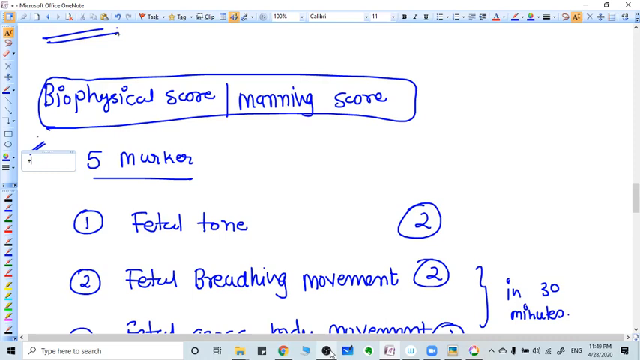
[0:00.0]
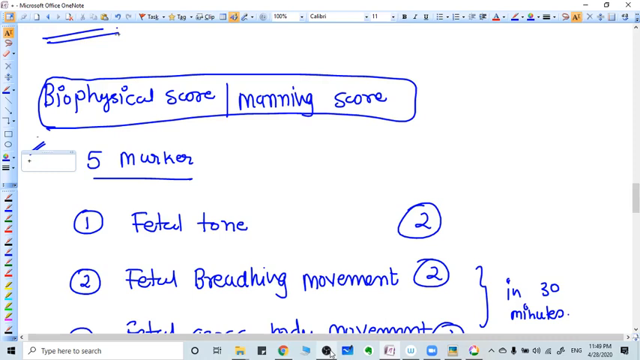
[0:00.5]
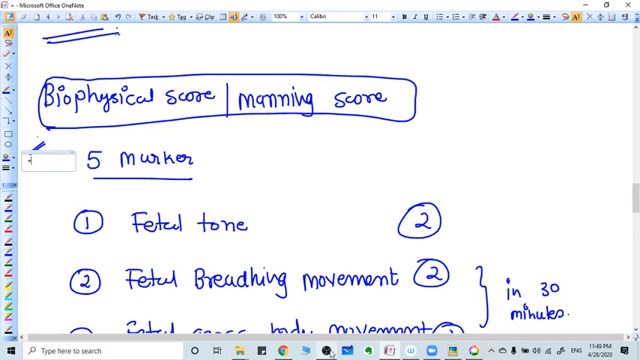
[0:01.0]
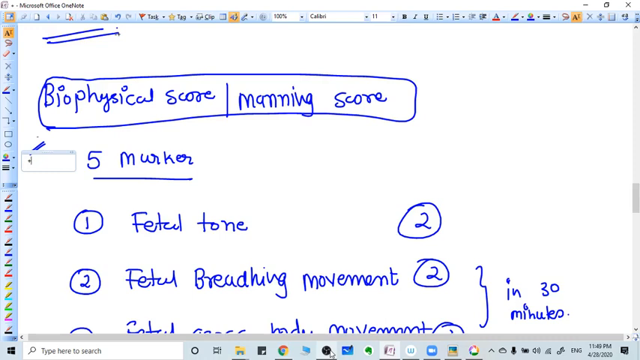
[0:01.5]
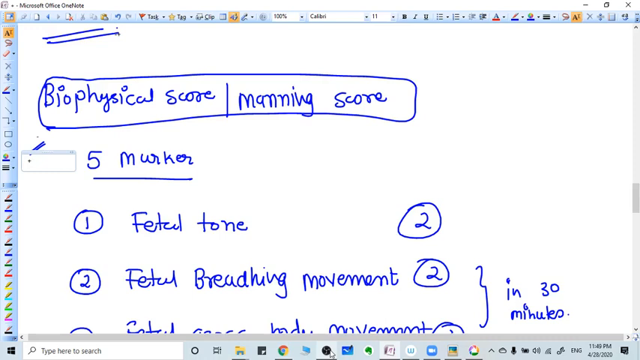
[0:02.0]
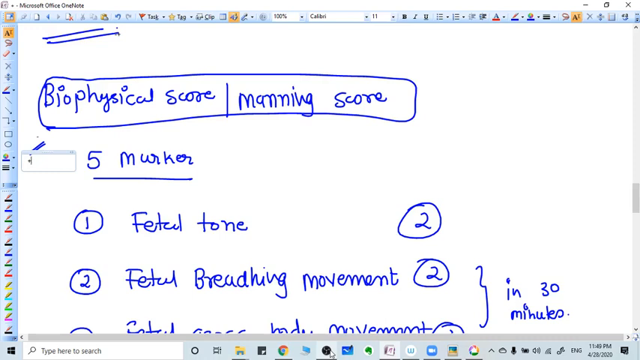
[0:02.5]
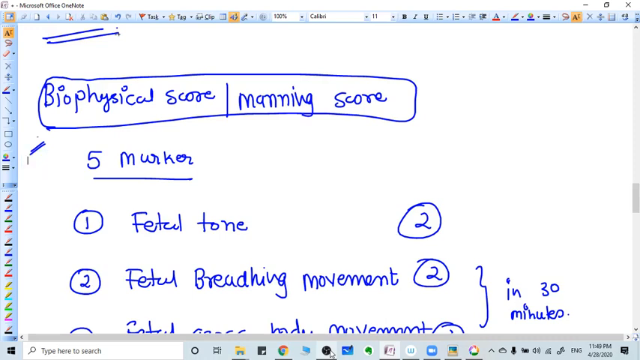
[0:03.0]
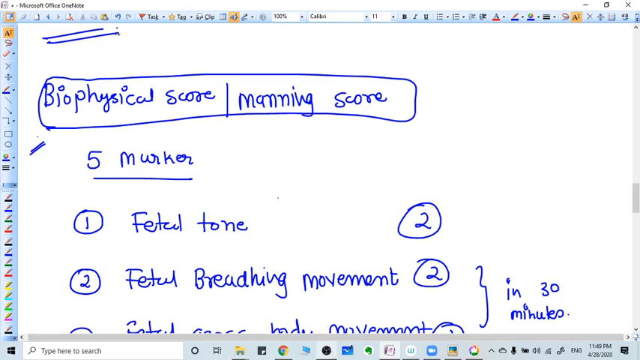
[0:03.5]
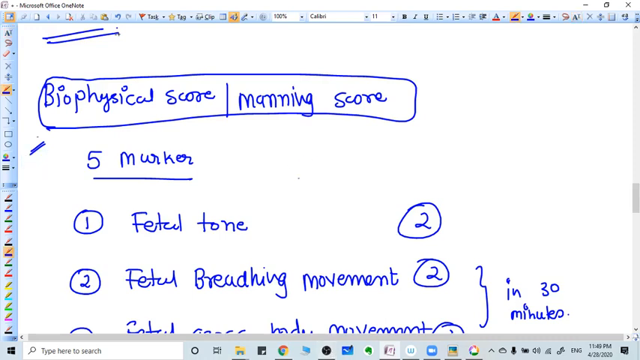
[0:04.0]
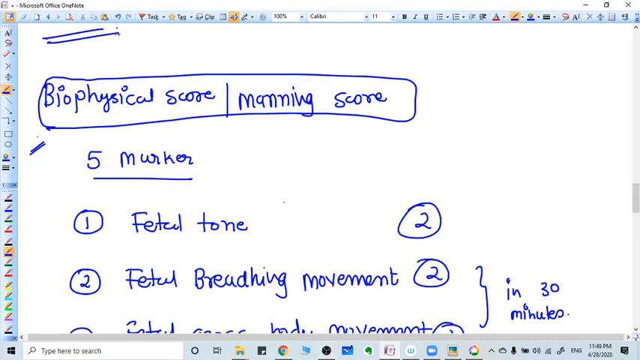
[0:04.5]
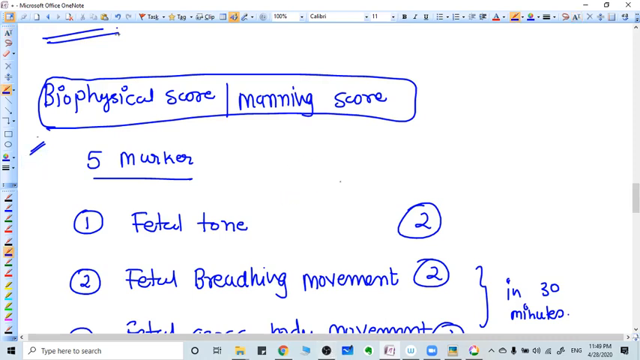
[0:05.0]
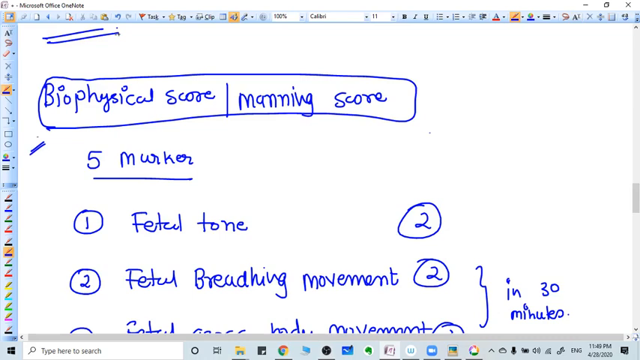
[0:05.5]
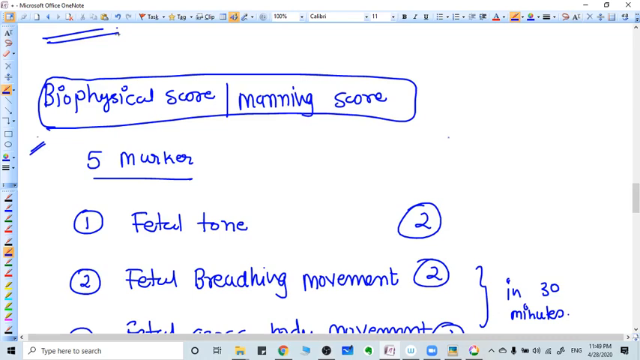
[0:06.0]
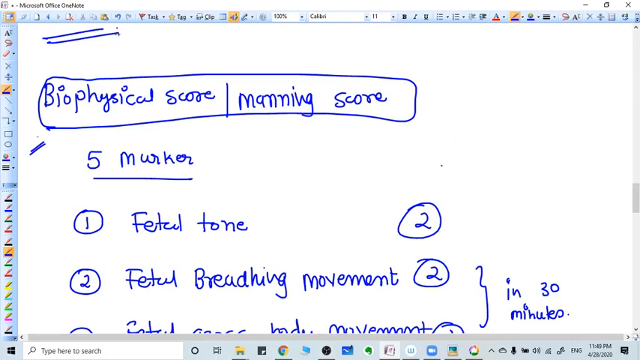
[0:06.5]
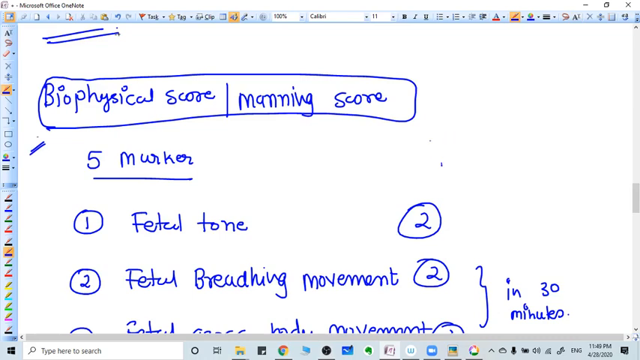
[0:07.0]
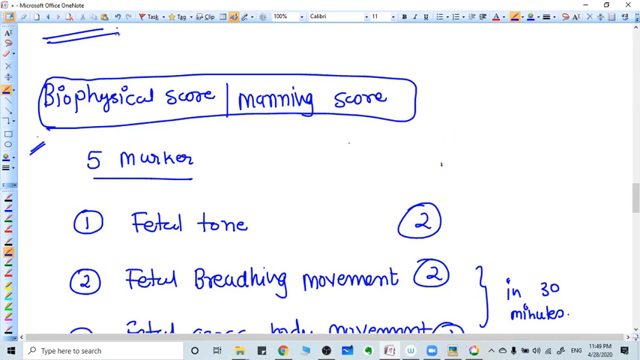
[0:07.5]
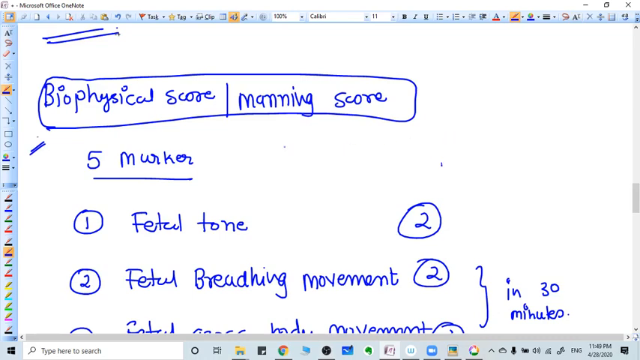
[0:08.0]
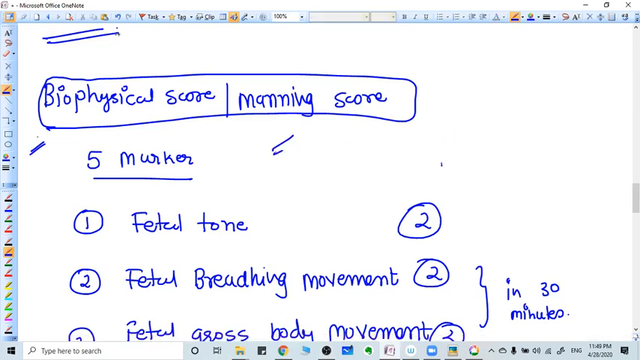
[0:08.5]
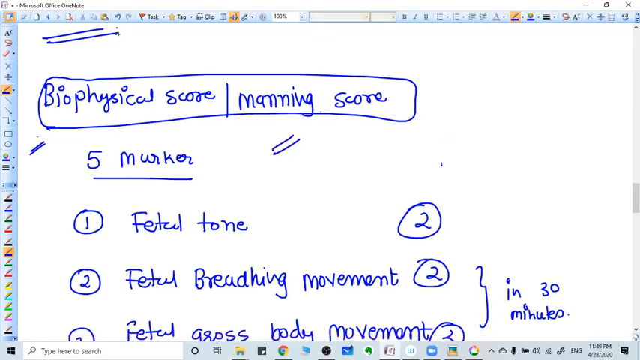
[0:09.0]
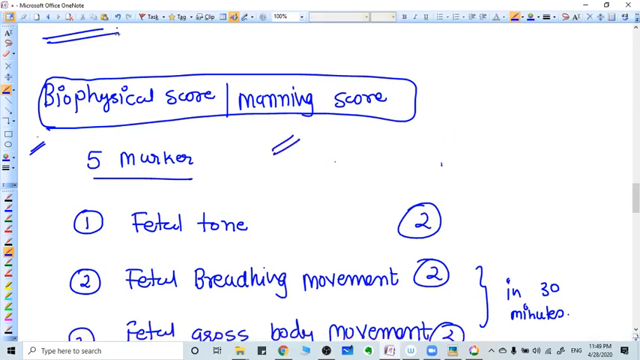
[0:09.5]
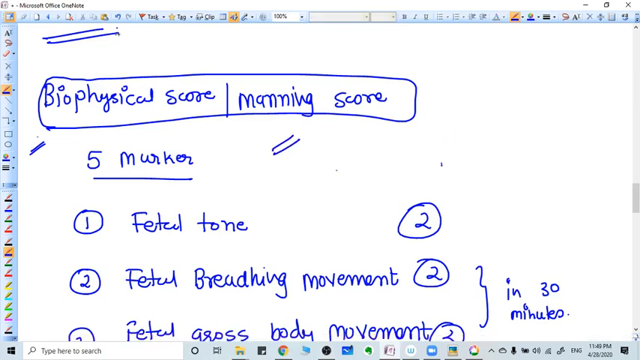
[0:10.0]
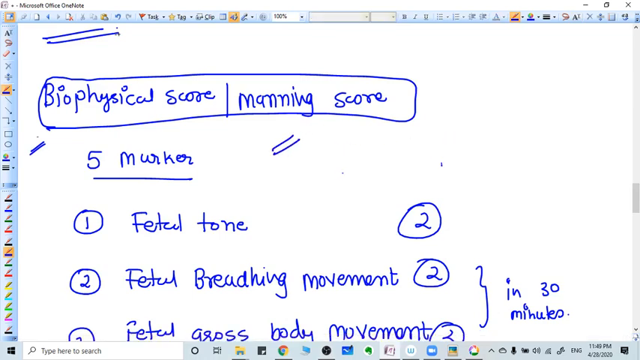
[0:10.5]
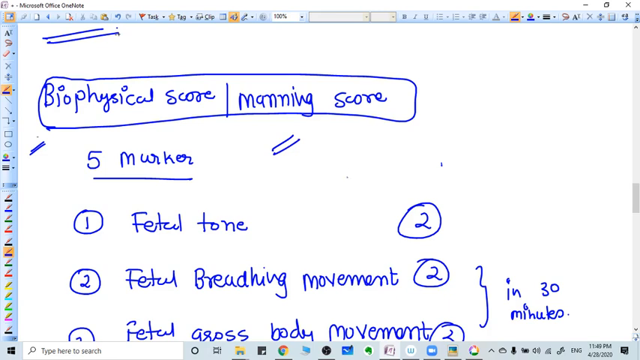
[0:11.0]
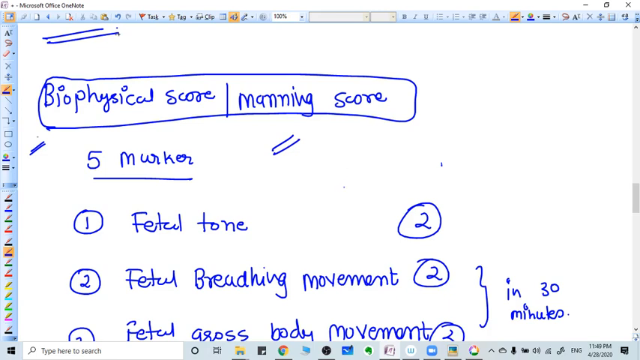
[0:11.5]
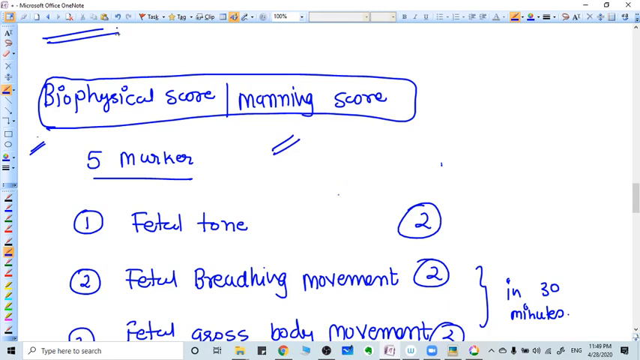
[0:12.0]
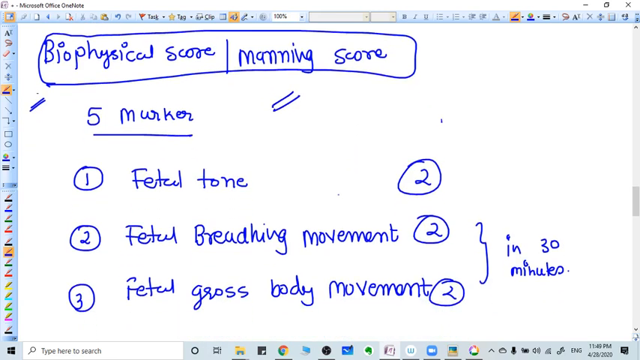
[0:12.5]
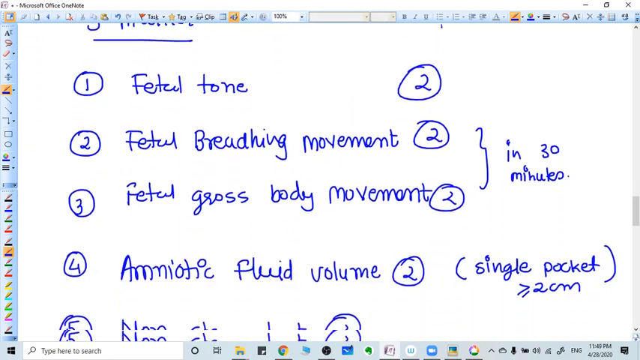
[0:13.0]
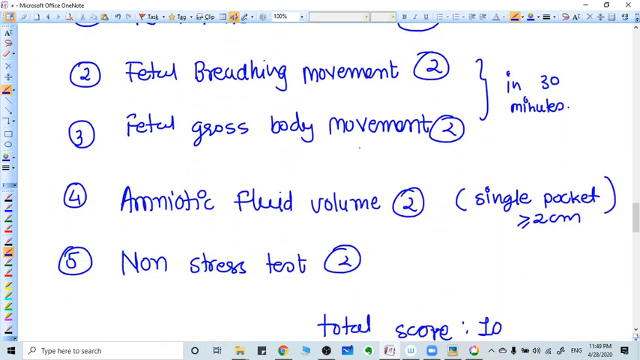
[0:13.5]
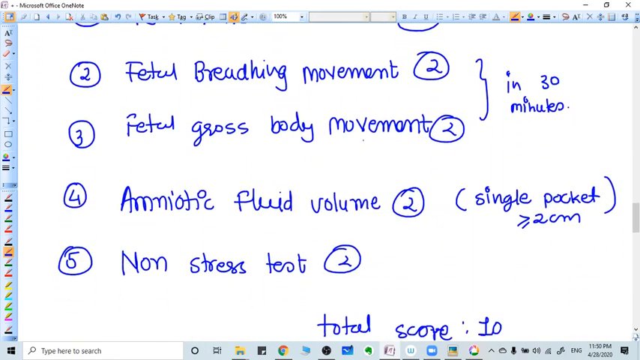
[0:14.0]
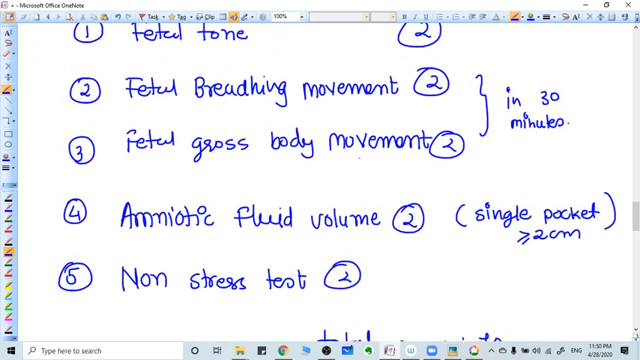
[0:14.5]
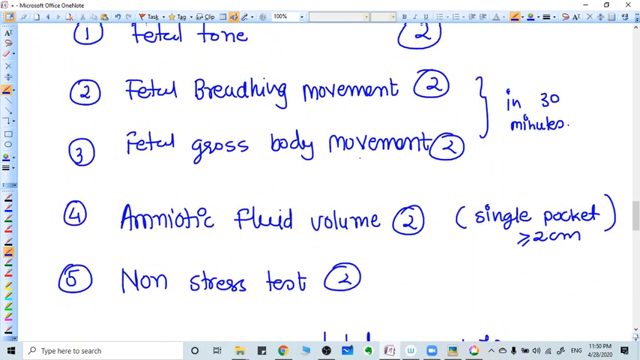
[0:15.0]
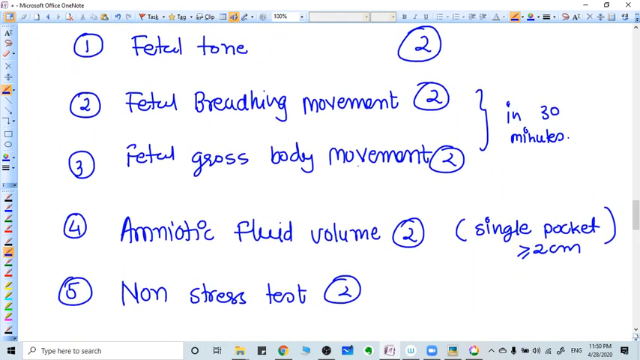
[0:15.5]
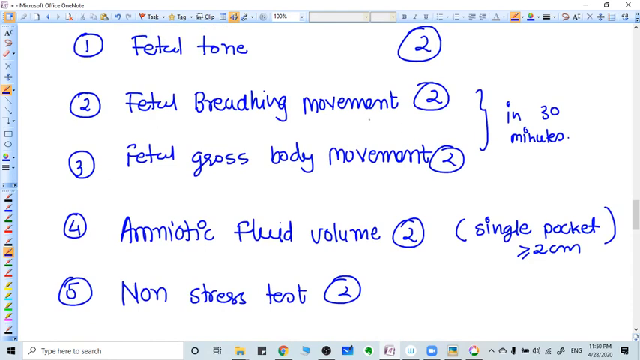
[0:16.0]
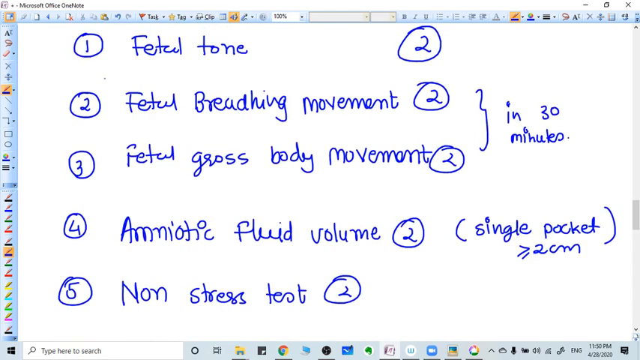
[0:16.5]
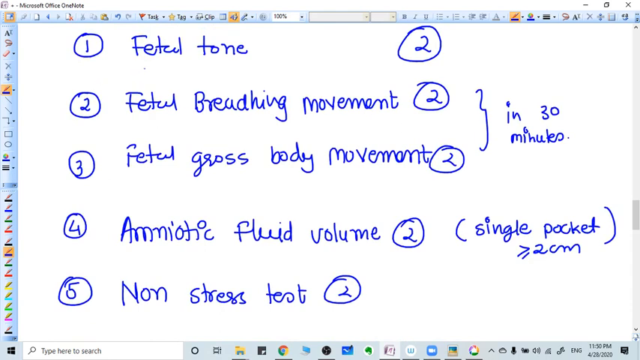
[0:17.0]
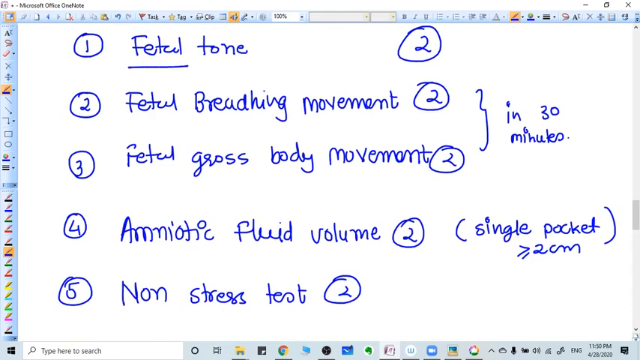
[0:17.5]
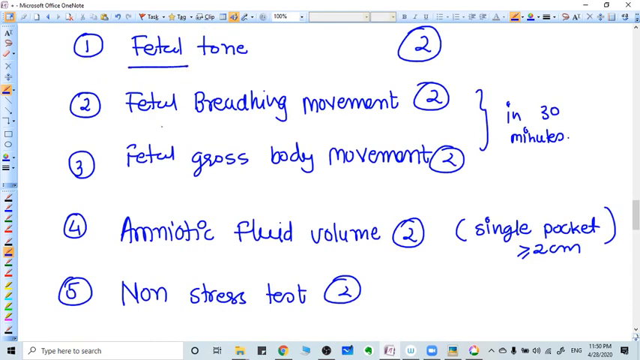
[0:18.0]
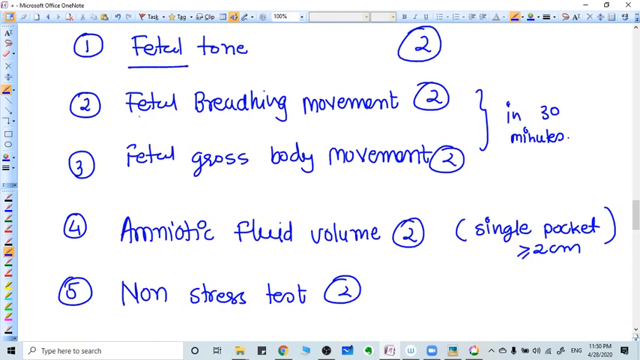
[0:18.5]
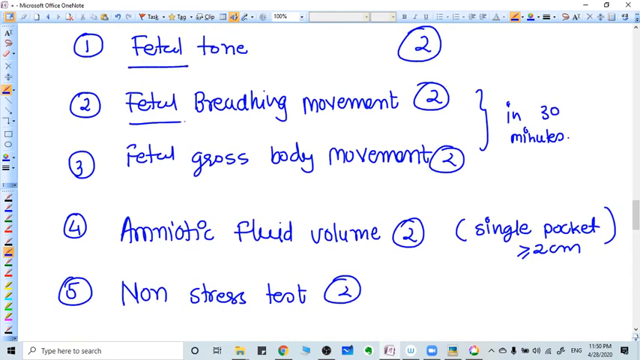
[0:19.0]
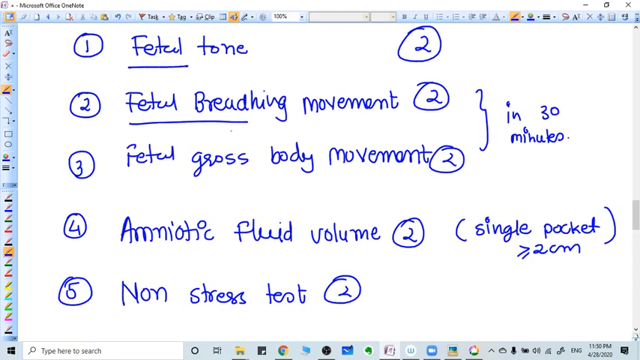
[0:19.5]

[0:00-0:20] The video opens on a full-screen view of Microsoft Office OneNote. Multiple icons run down the left side of the screen, and across the top from left to right the number "100%" is visible, along with a font size of 11. There are minimize and maximize signs and an X to close the page. The words in the note are written in blue. At the top it says "biophysical score / Manning score," with a circle around it. Underneath is what looks like "Merkur." A numbered list from one to five follows, and the list scrolls down as the video plays: "fetal tone," "fetal breathing movement," "fetal gross body movement," "amniotic fluid volume," and "non-stress tests."